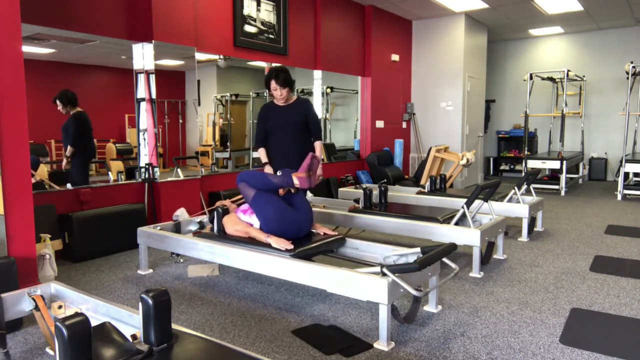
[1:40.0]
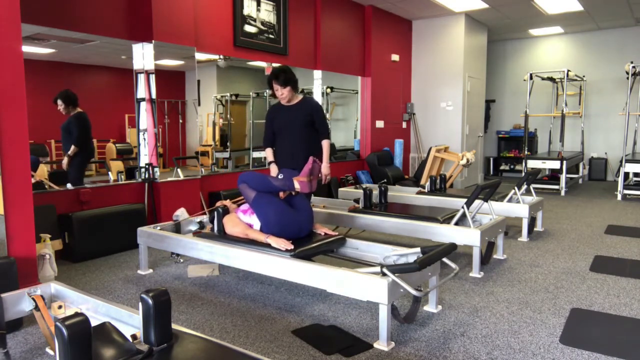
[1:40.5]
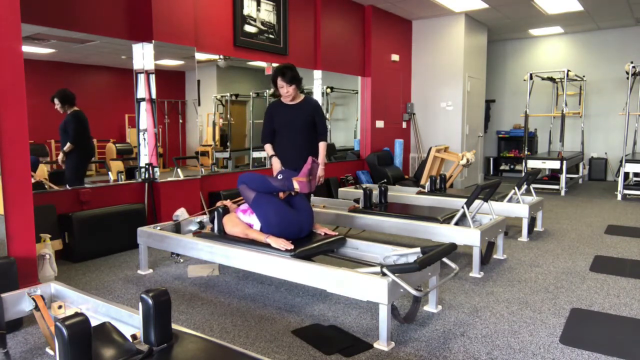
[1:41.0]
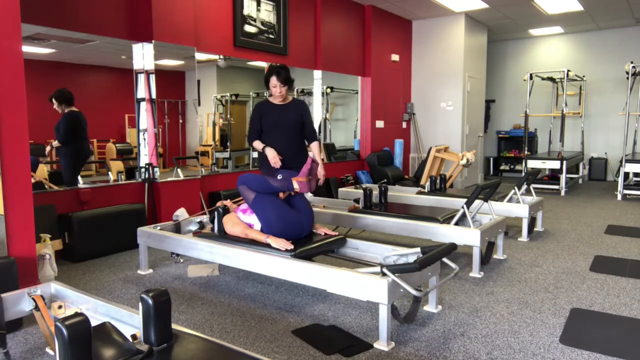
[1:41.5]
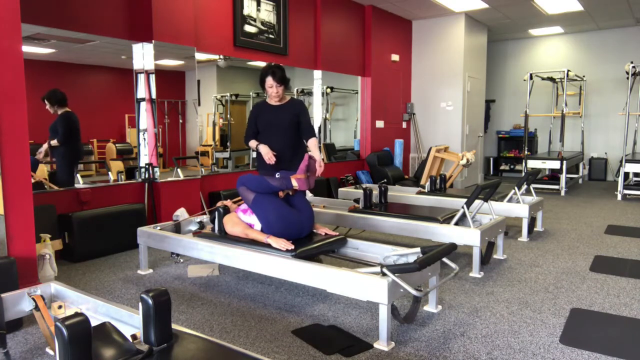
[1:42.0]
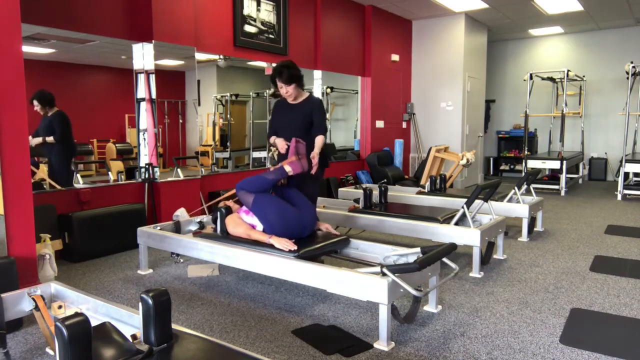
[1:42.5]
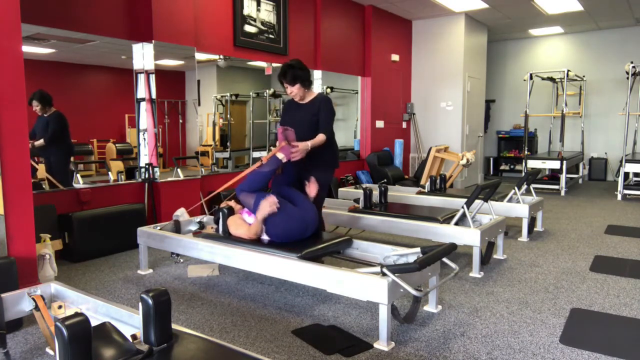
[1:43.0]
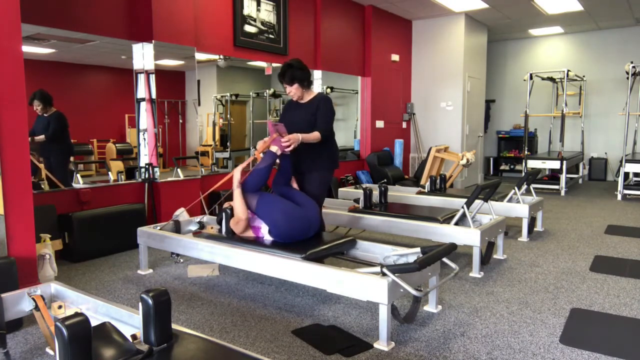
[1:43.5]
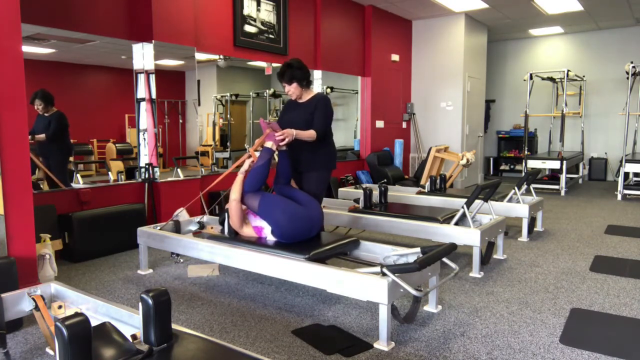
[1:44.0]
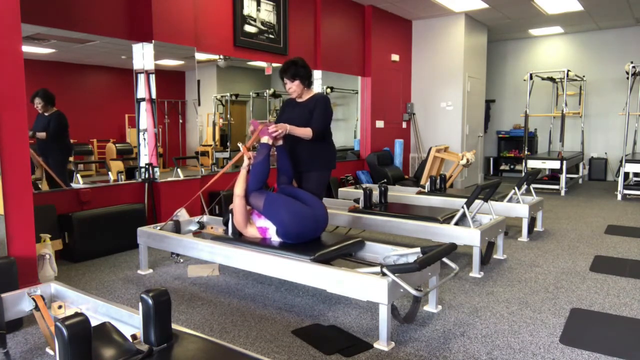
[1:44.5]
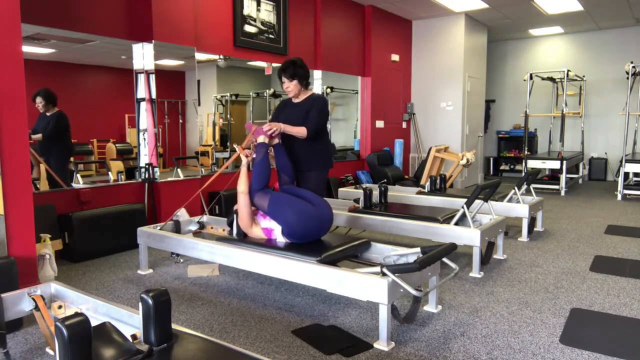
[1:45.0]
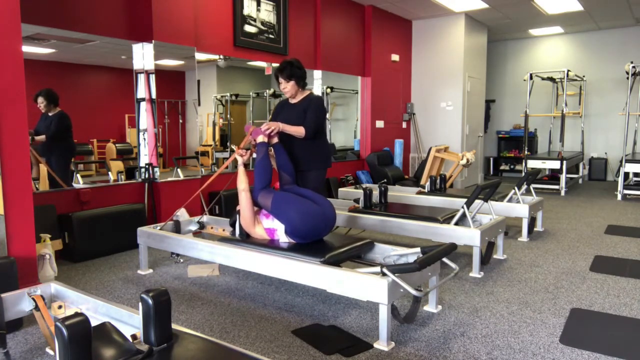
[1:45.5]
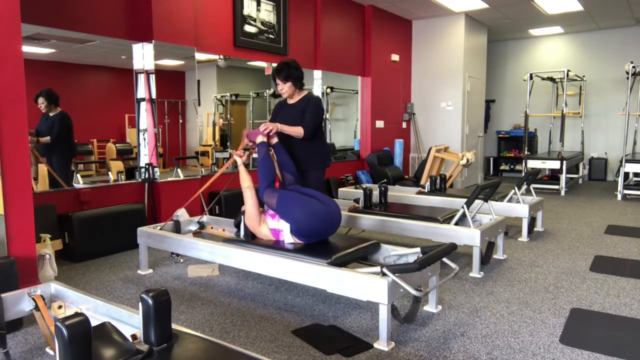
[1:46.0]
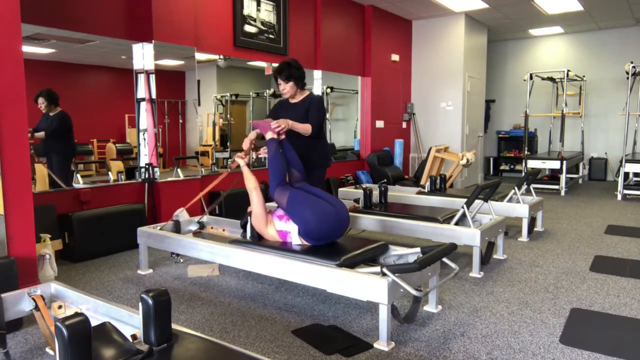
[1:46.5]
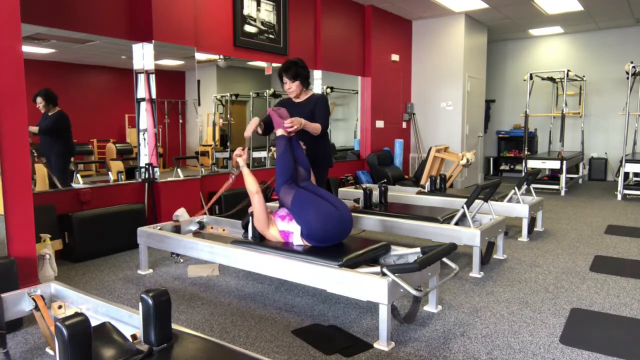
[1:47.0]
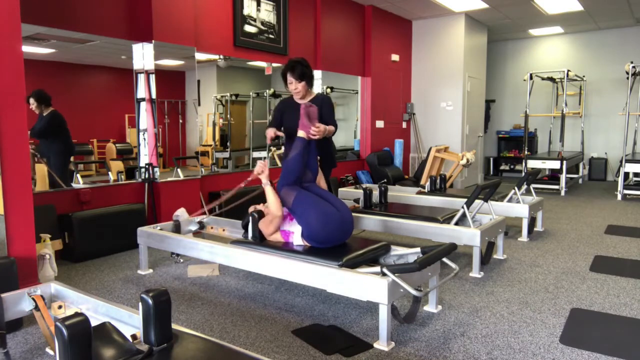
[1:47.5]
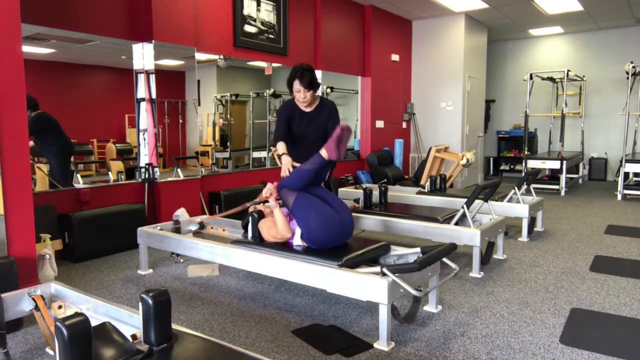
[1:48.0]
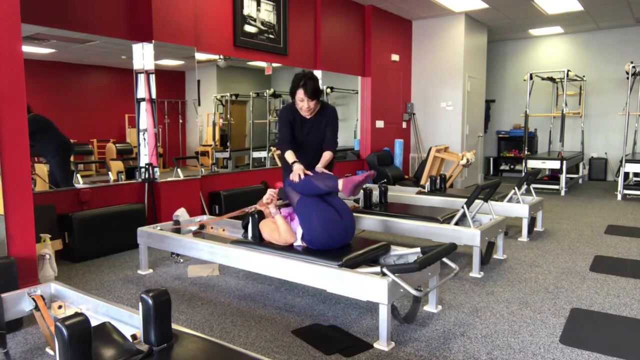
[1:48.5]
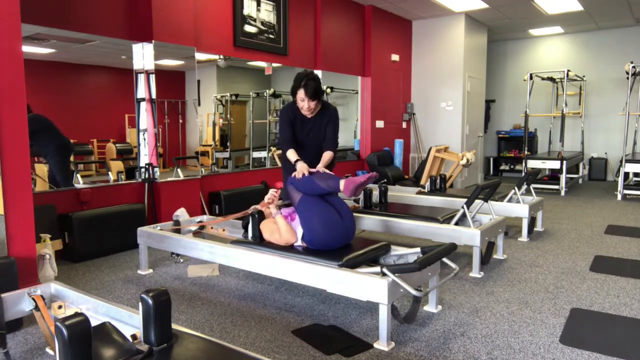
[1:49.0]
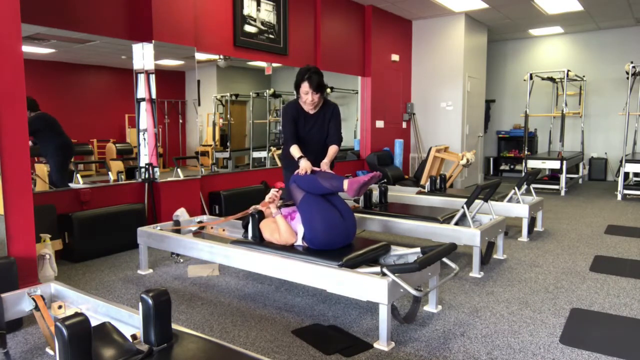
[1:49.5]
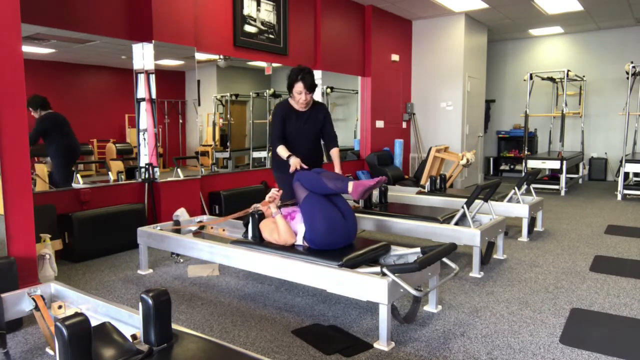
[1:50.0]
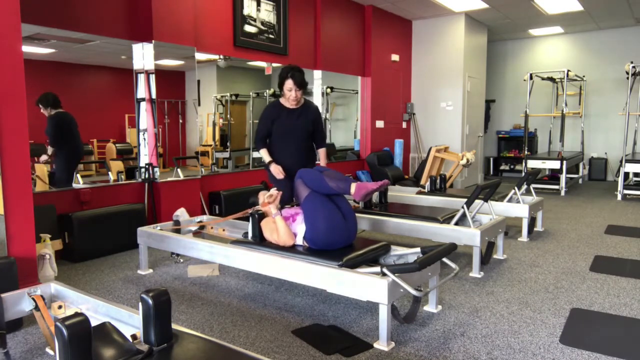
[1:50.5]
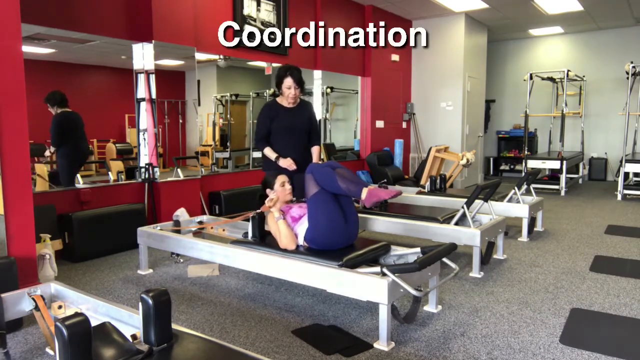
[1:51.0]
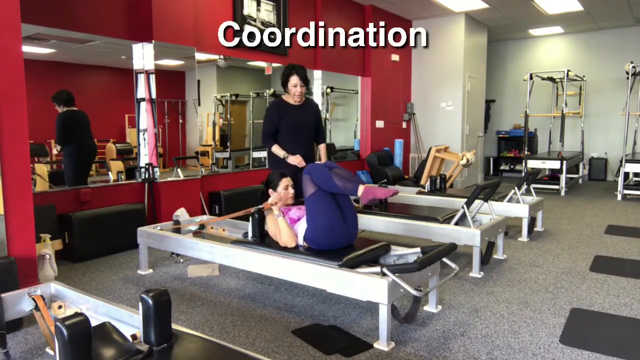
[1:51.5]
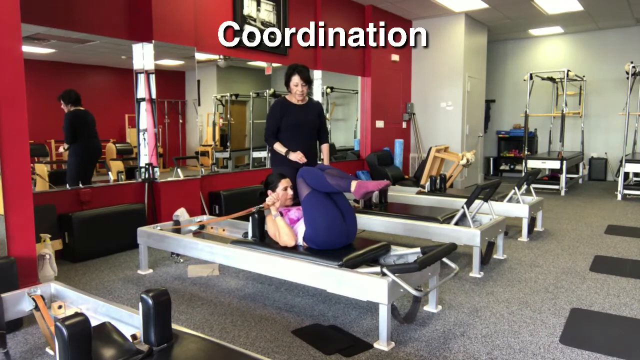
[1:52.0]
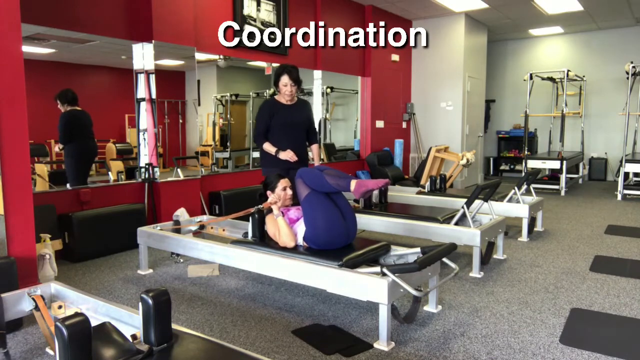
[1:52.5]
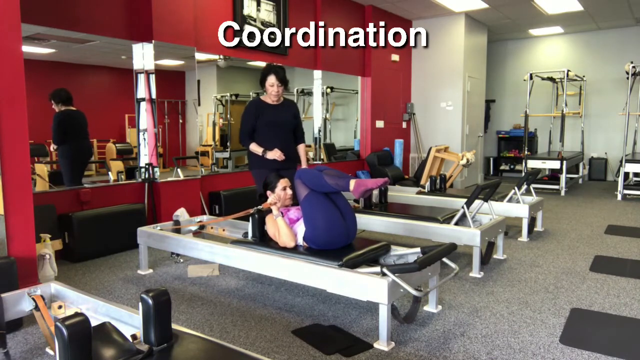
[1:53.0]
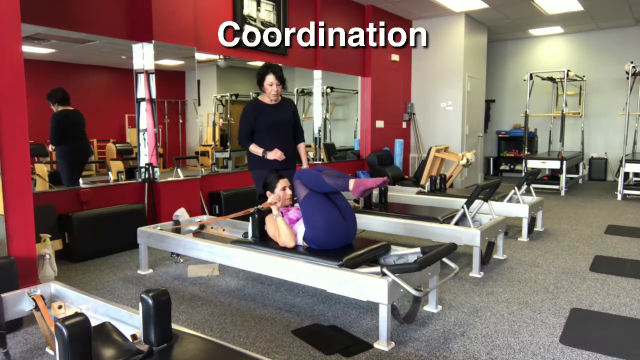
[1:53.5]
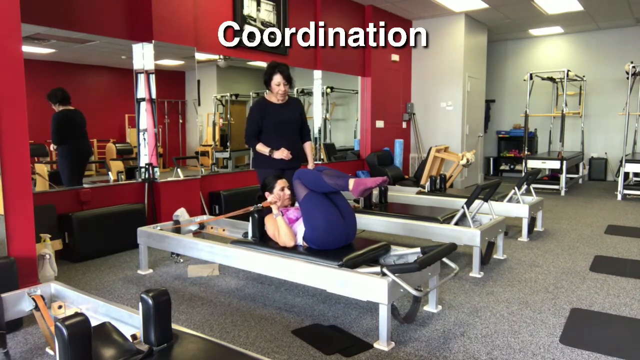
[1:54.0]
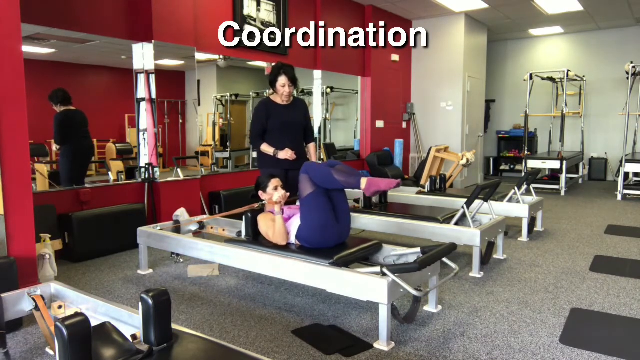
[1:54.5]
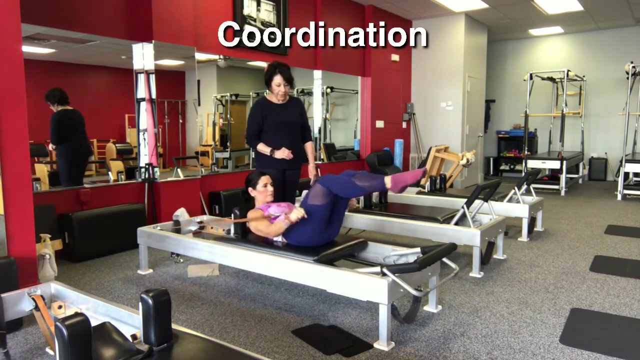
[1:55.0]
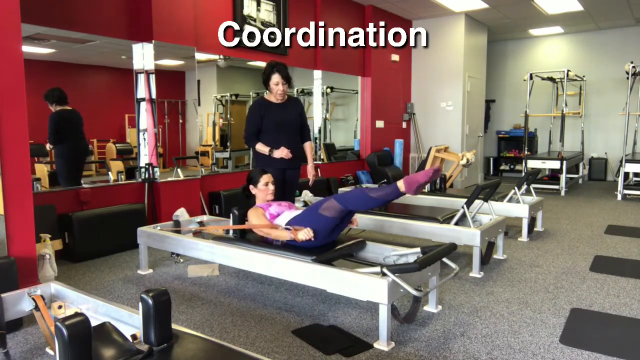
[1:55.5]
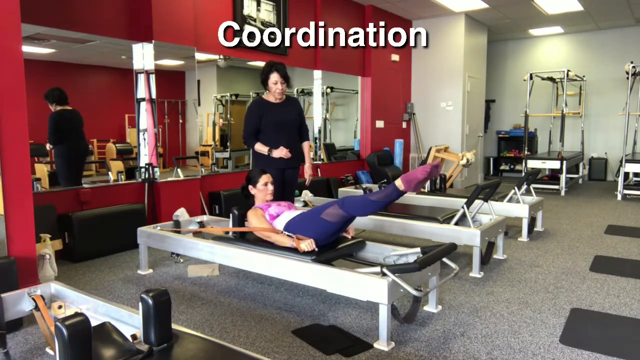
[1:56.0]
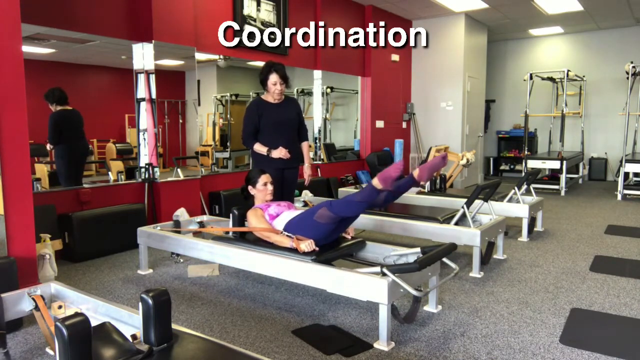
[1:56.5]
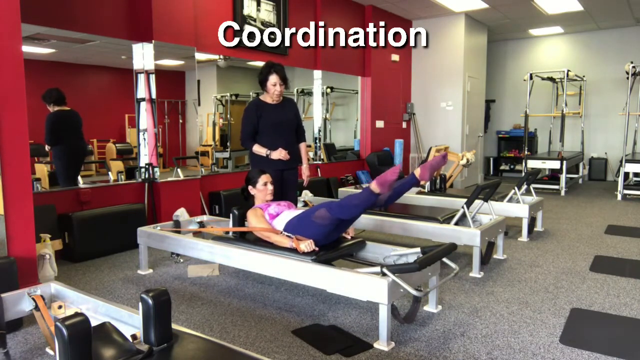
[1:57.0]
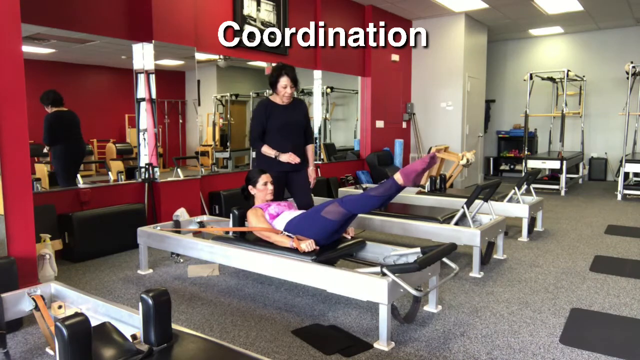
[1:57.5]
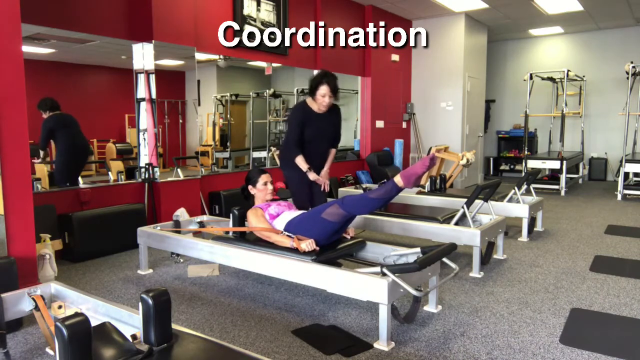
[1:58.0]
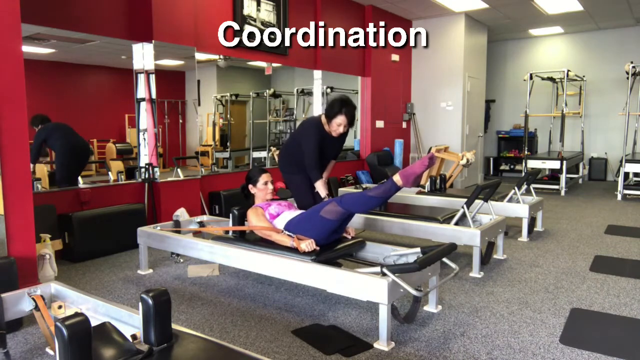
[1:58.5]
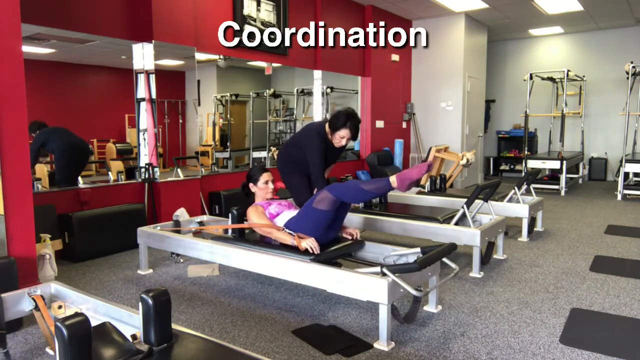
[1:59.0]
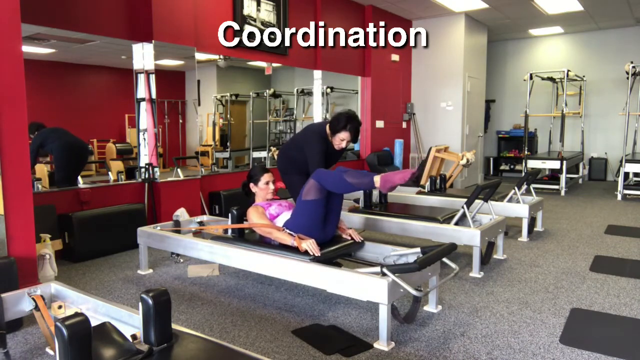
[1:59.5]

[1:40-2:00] In the Pilates studio with reformer machines lined up in front of a red mirrored wall, a woman is on a reformer in the foreground and an instructor standing behind the machine guides her through her exercises. At first her feet are in the loops of the stretch bands, she is resting on the carriage with her arms flat on either side of her, and her knees are bent with her feet together. The instructor helps her remove the loops from her feet and pushes her knees back down so they are bent over the woman's chest; her hands are now in the loops of the stretch bands while she holds her feet off the carriage. The word "Coordination" appears at the top of the screen. The woman lifts her head off the carriage, pulls the loops down so the carriage moves backwards slightly, and extends her legs in front of her, moving her feet out and back in a scissors maneuver, then begins to bend her knees and pull them toward her face.